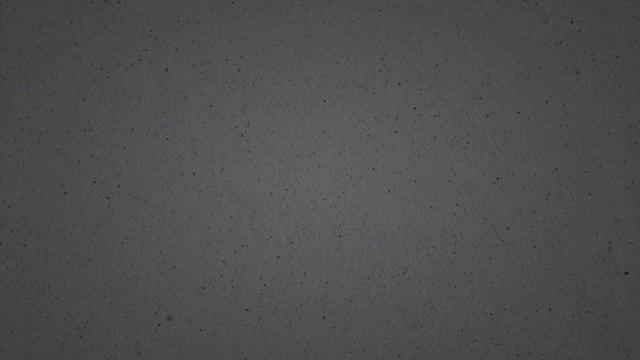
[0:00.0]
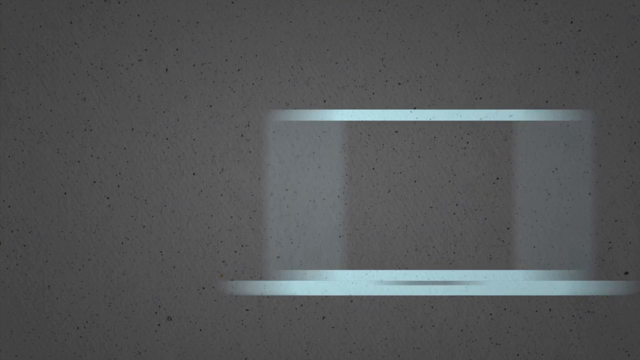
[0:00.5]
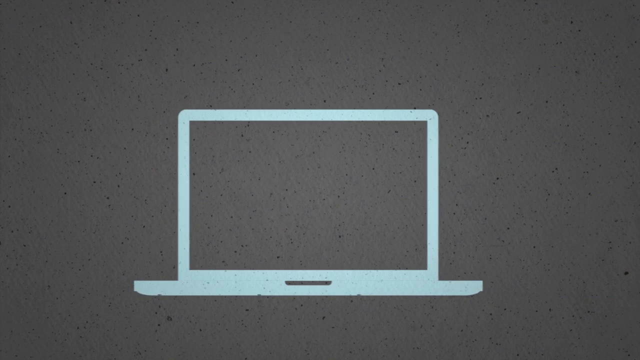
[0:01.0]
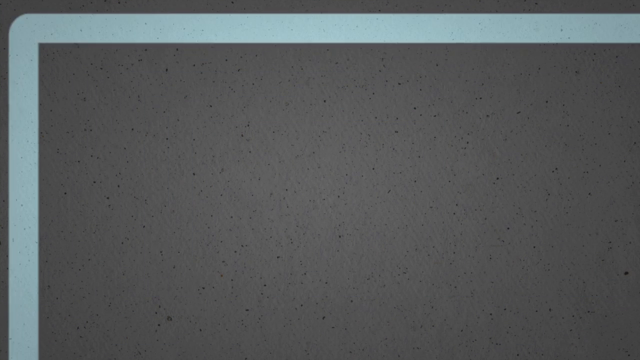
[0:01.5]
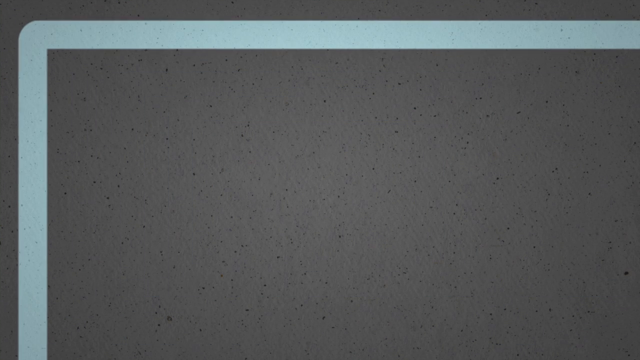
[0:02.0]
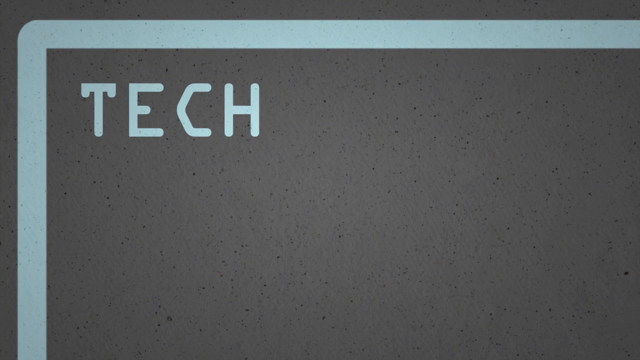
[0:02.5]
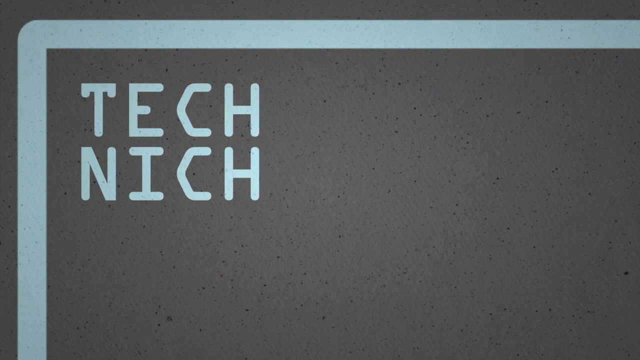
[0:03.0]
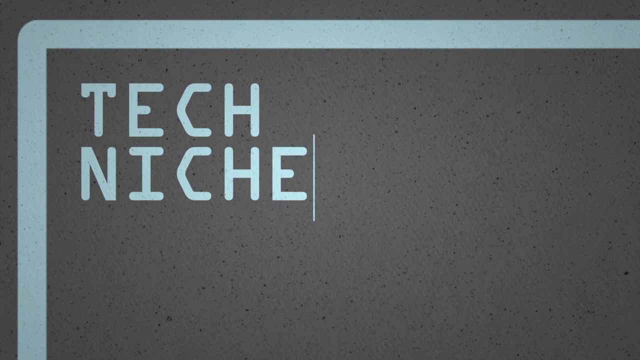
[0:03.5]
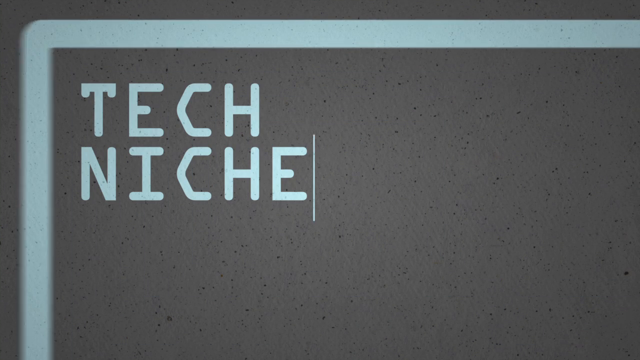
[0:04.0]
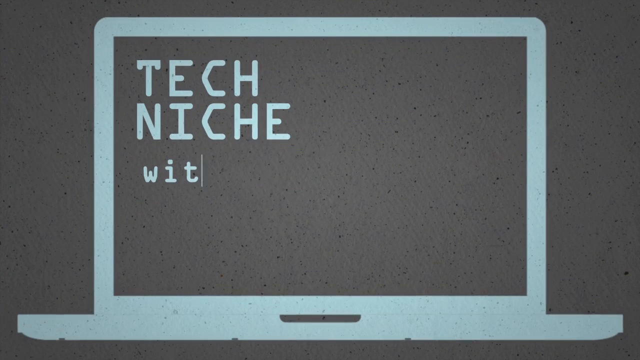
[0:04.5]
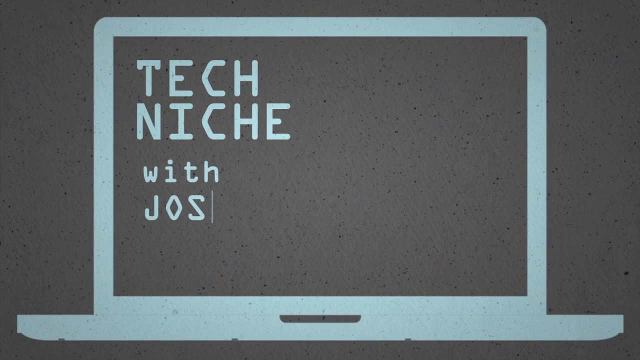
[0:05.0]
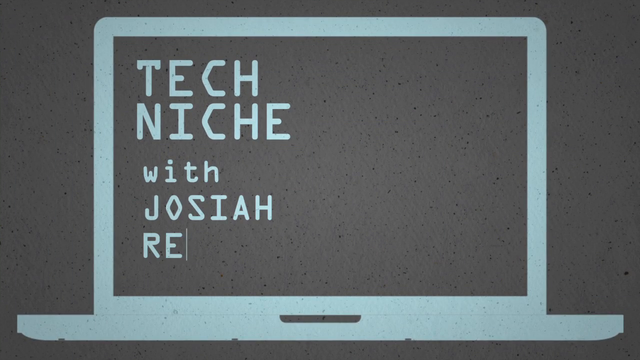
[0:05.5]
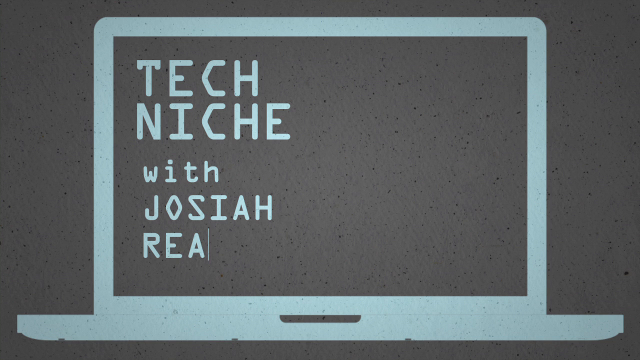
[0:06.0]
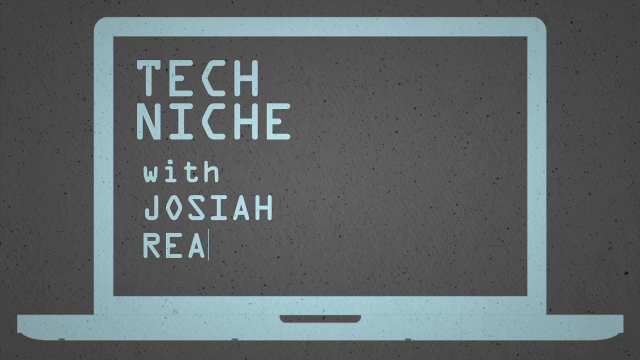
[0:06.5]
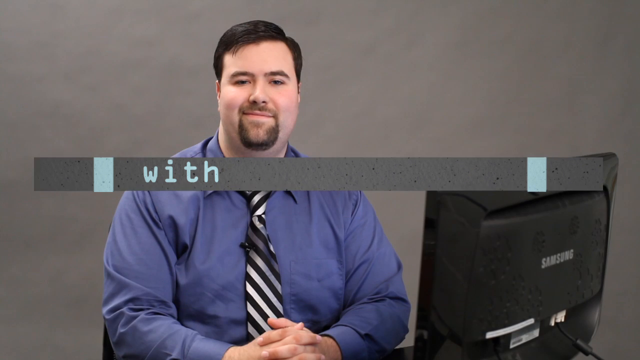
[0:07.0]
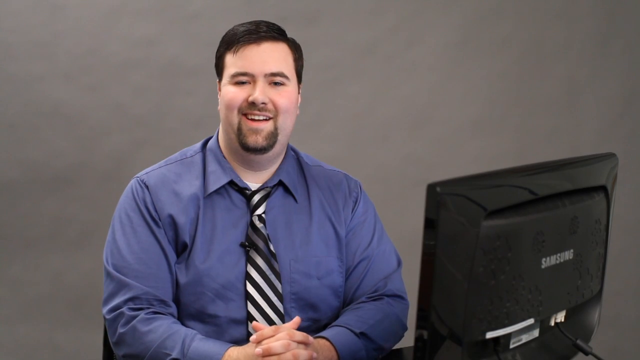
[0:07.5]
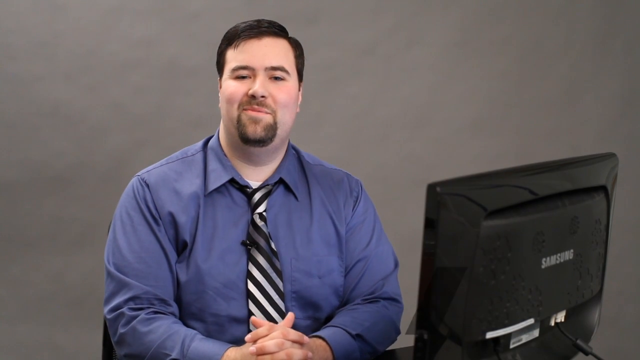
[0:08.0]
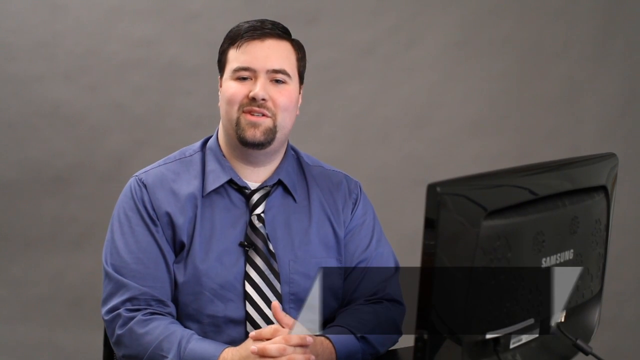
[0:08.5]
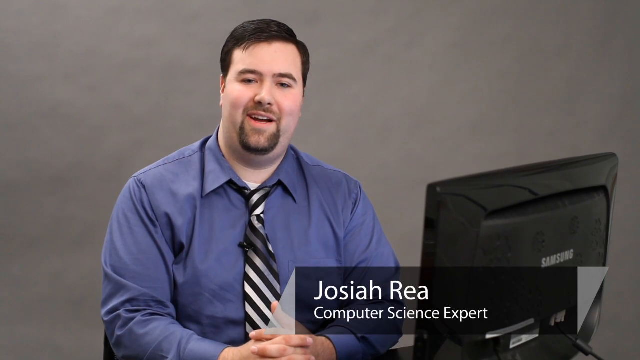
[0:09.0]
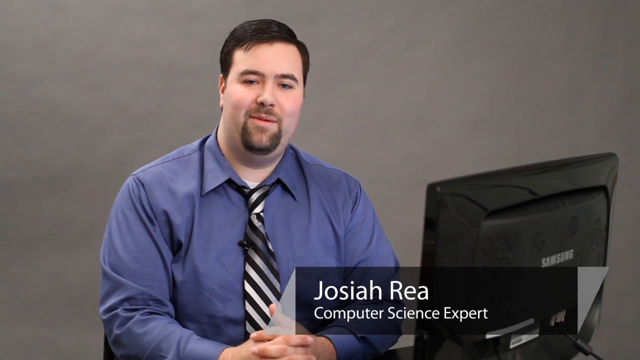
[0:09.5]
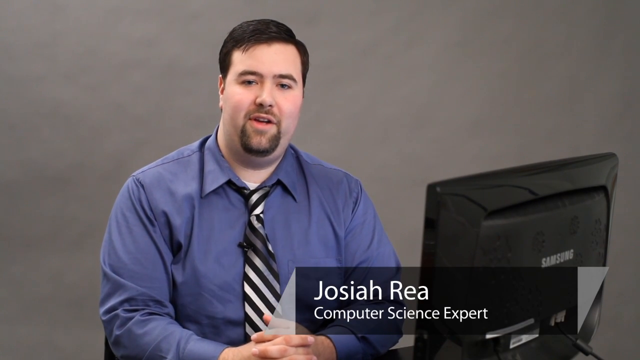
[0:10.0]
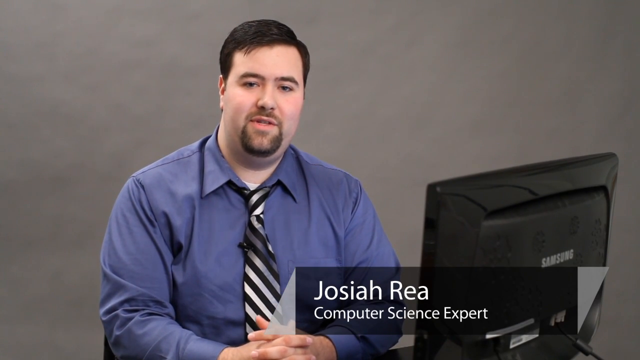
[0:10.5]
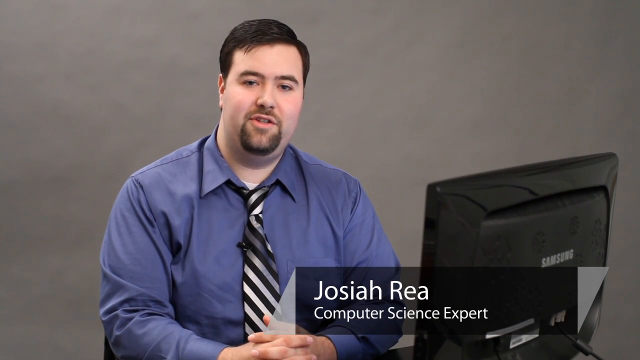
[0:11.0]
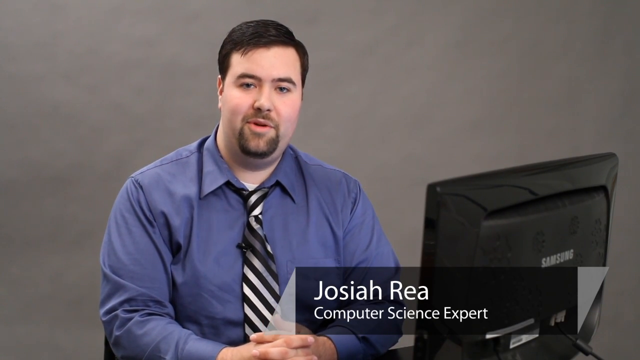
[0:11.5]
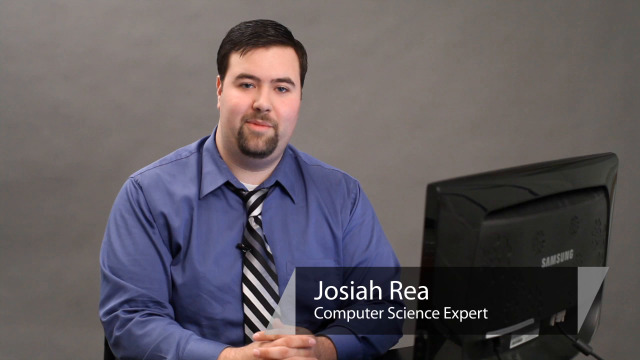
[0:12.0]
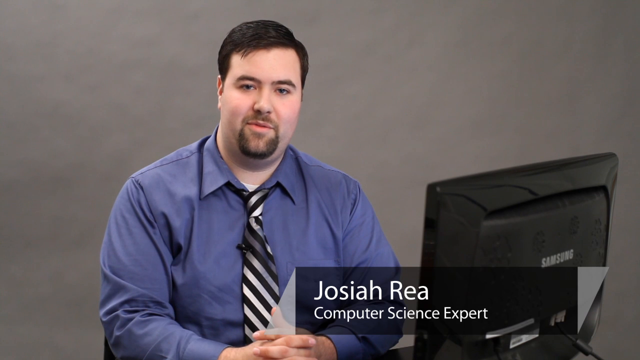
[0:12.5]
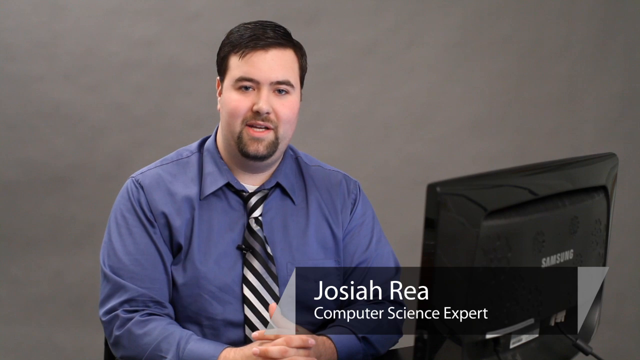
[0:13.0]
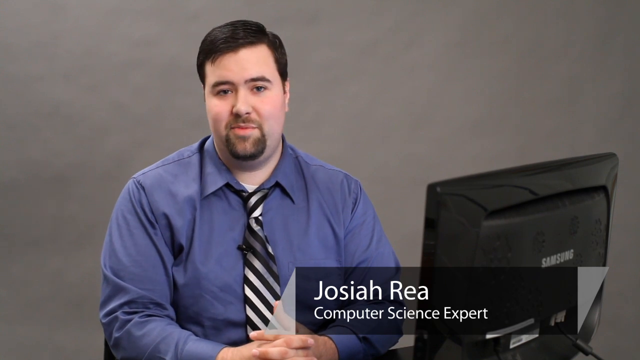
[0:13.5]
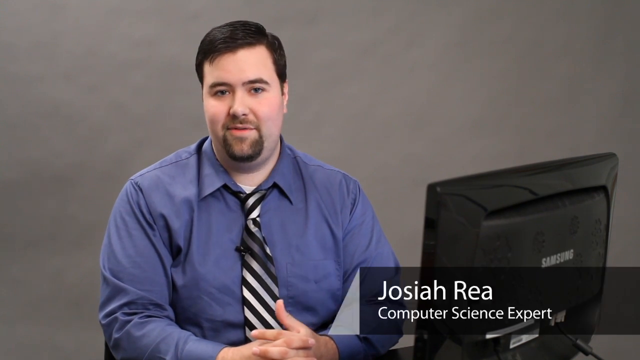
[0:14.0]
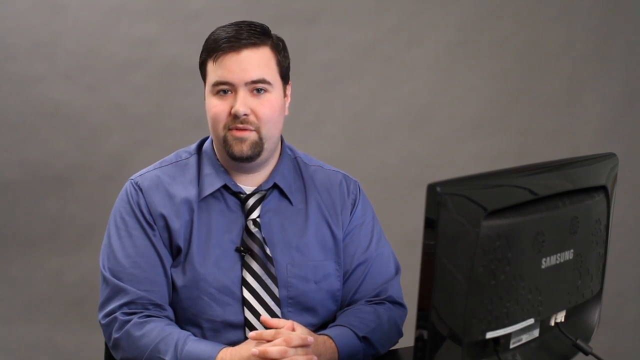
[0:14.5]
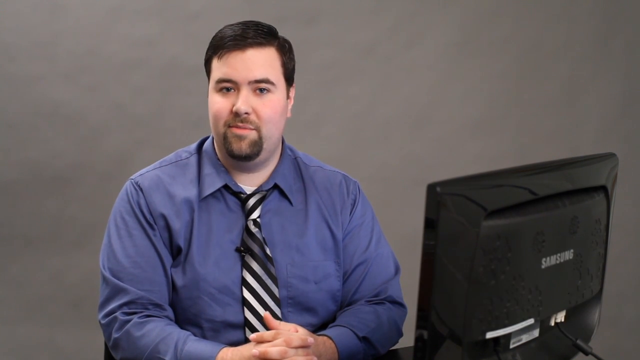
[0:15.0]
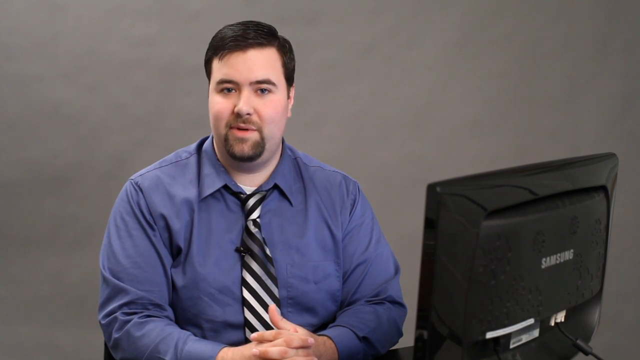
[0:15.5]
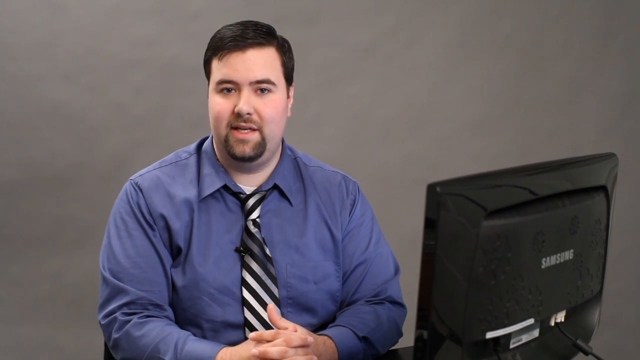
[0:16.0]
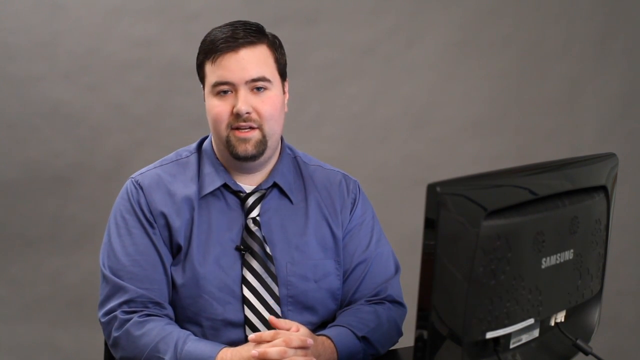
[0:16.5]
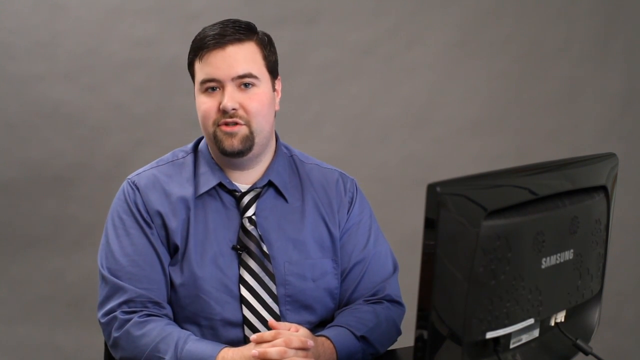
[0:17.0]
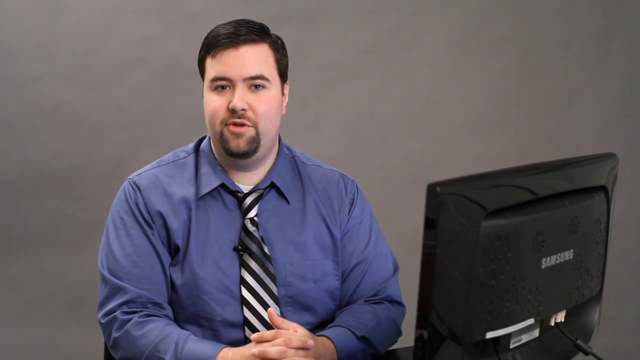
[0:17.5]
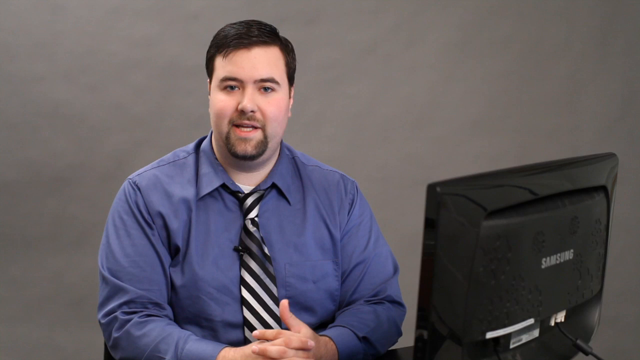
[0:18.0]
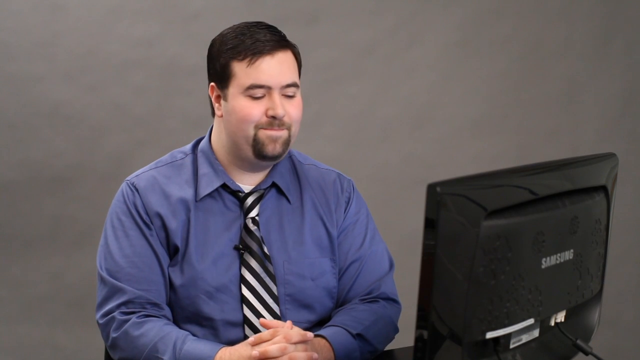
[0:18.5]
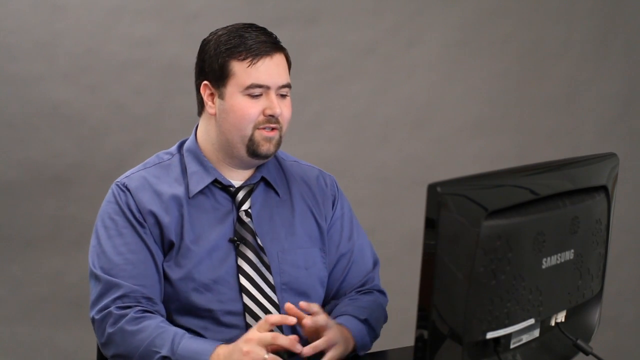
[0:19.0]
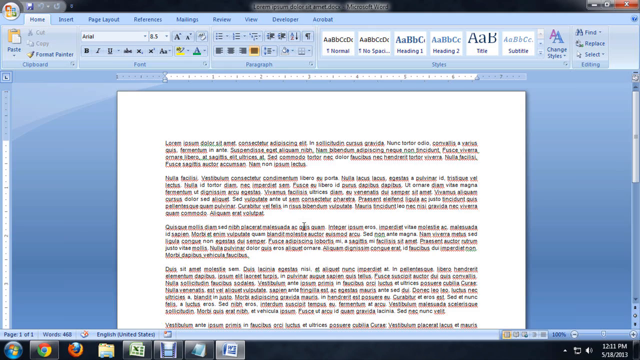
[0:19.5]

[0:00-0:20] The video opens on a graphic of a laptop outline, then zooms in on the top right corner, where text appears reading "tech niche with Josiah R.E.A." It then pans to a man named Josiah R.E.A., a computer science expert. He wears a blue collared shirt and a necktie with diagonal silver and black stripes. He is a little heavyset, with black hair parted on the right side of his head, a goatee and a mustache. He is sitting in front of a Samsung computer monitor, speaking directly to the camera and making very light facial gestures. Toward the end he sort of moves his shoulder up and down, then types on the keyboard in front of him. The scene then pans to a screenshot of his computer monitor, which shows Microsoft Word with a document containing text.